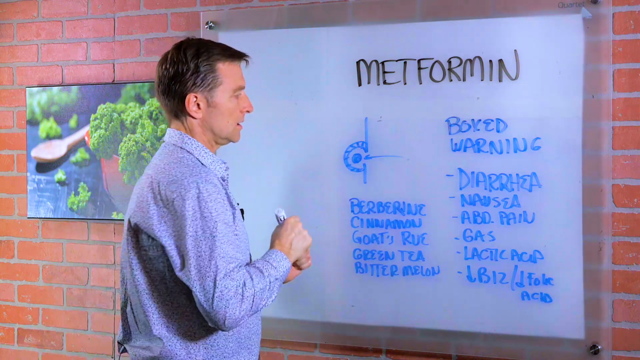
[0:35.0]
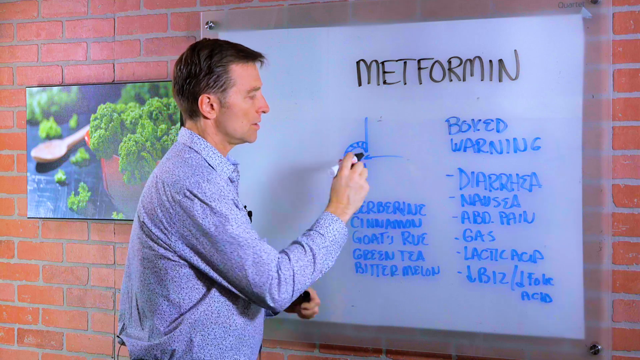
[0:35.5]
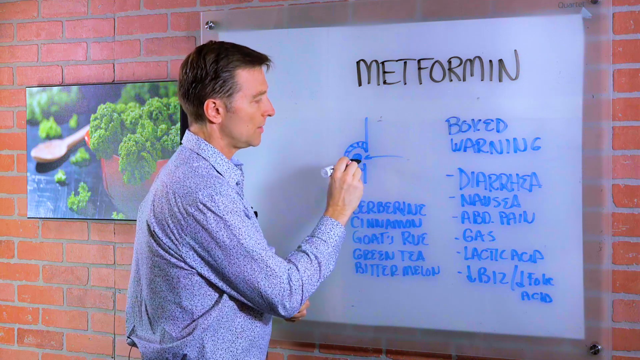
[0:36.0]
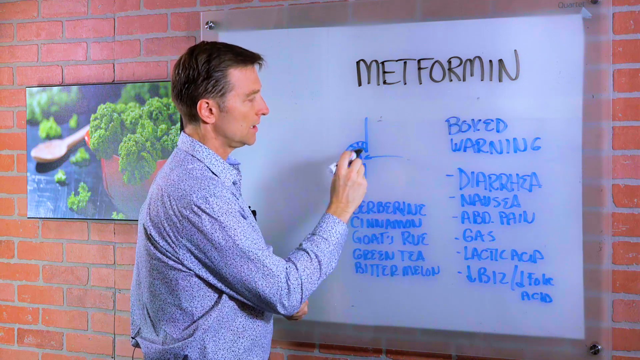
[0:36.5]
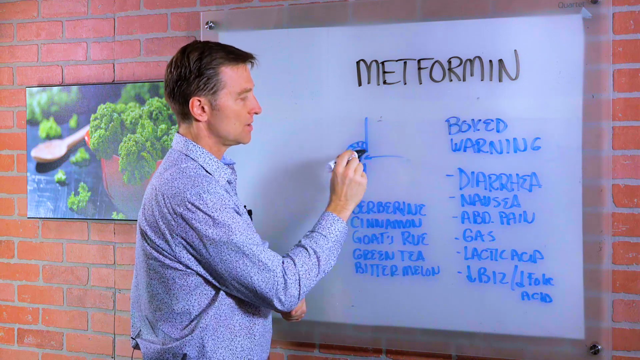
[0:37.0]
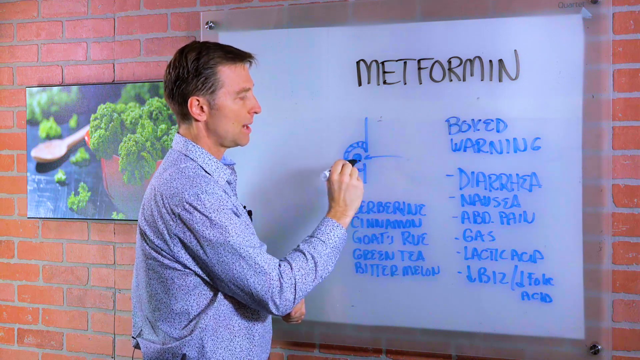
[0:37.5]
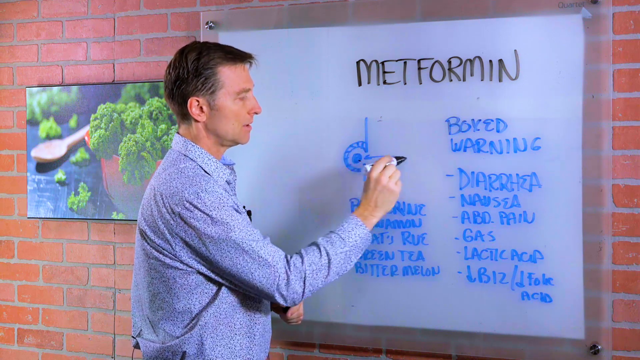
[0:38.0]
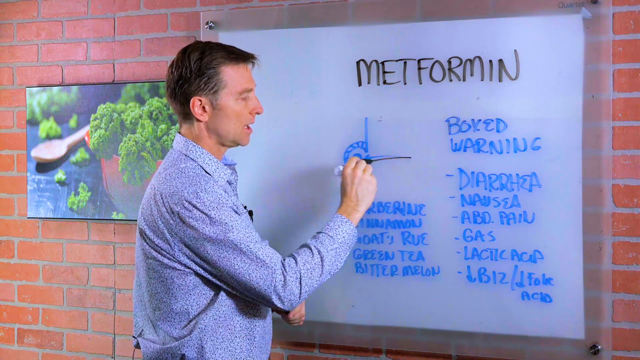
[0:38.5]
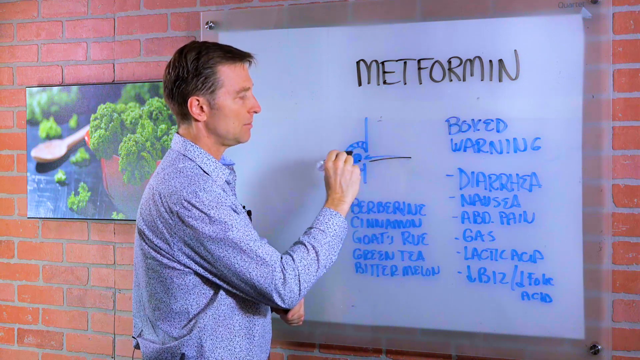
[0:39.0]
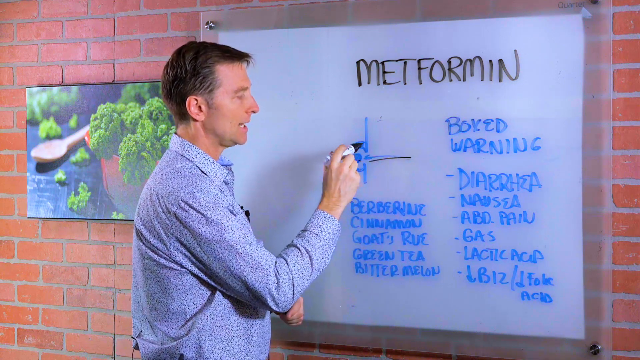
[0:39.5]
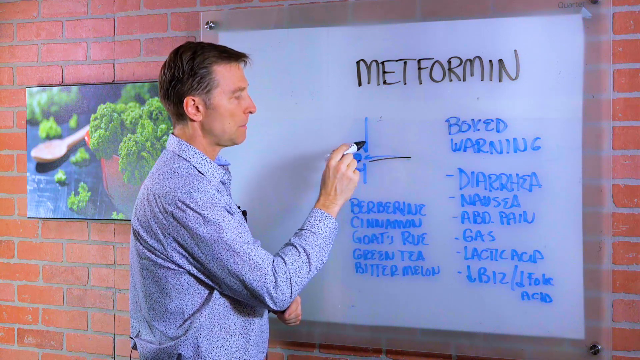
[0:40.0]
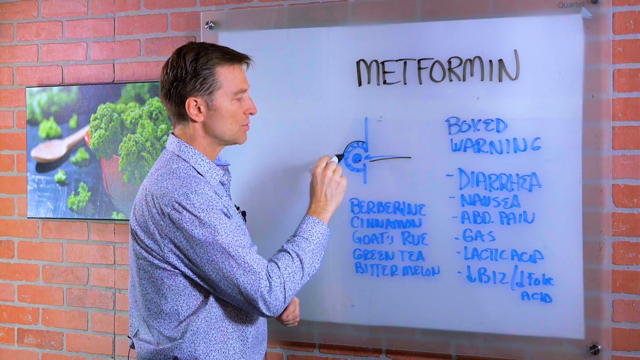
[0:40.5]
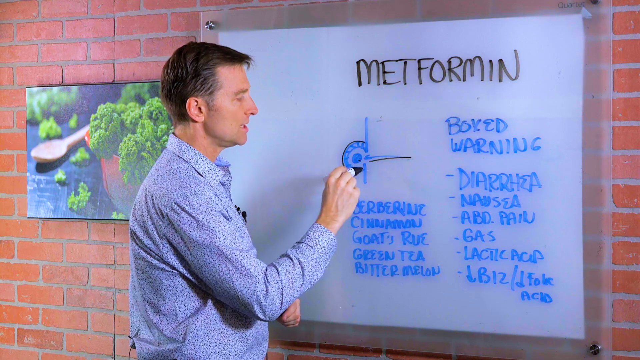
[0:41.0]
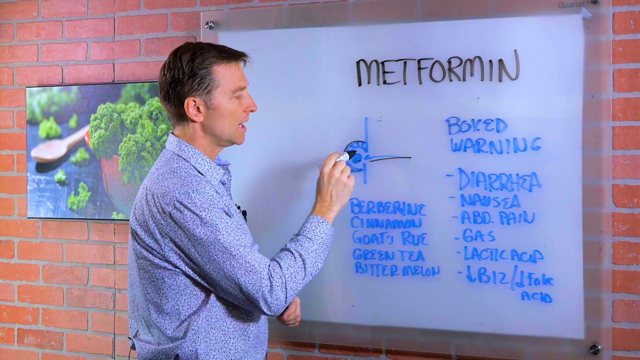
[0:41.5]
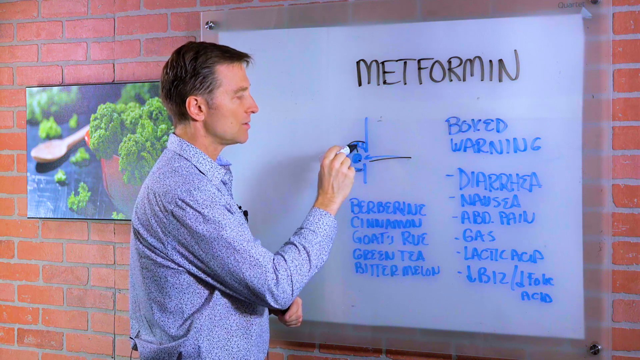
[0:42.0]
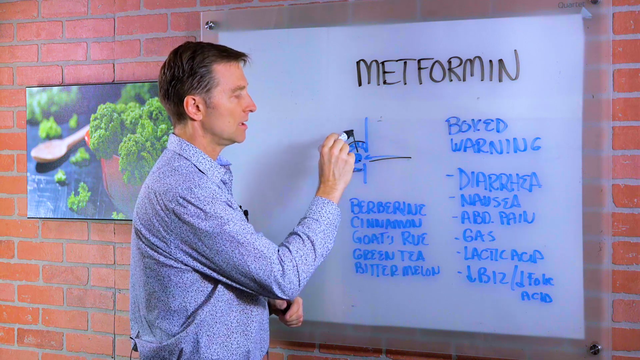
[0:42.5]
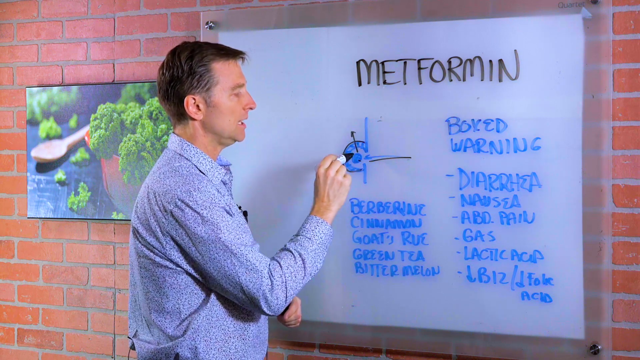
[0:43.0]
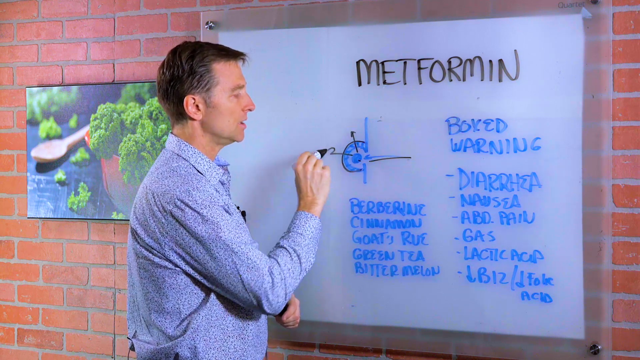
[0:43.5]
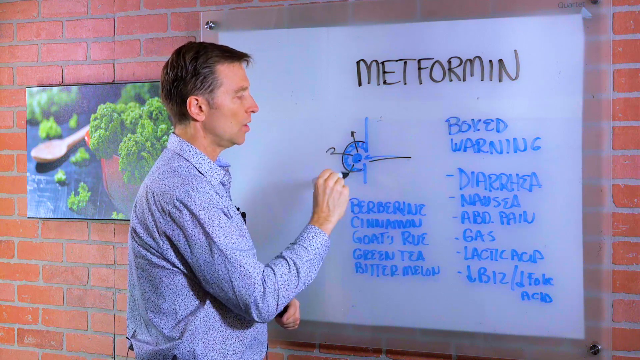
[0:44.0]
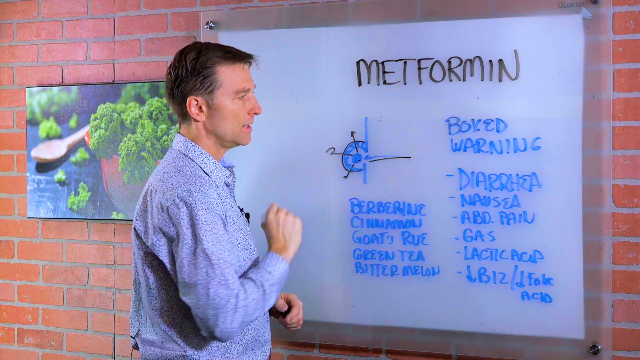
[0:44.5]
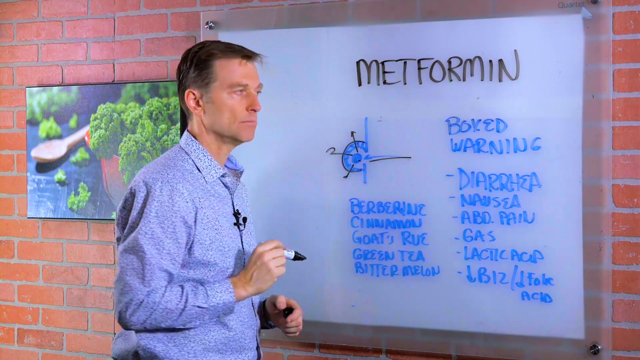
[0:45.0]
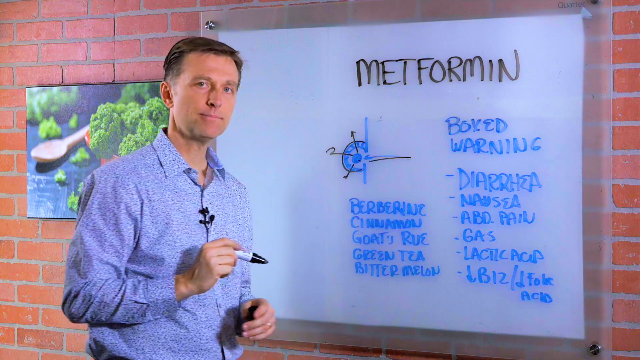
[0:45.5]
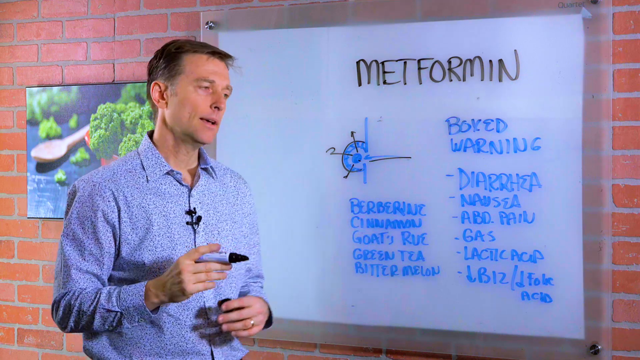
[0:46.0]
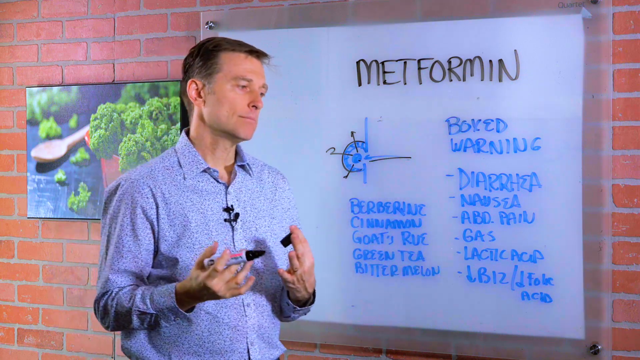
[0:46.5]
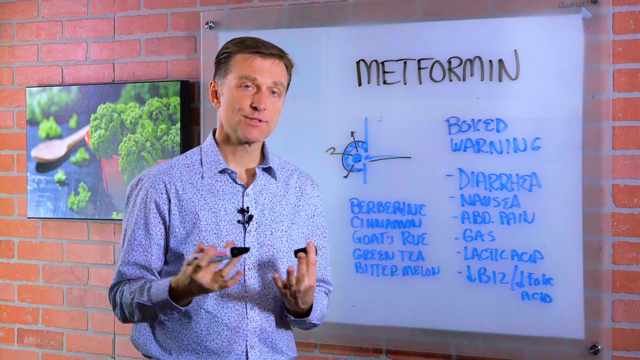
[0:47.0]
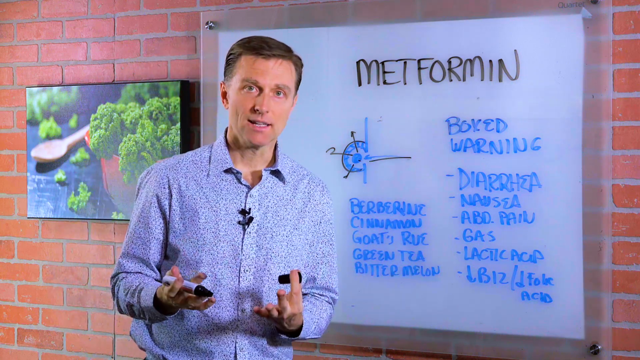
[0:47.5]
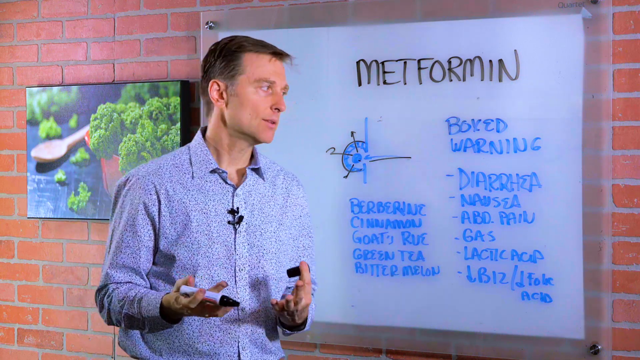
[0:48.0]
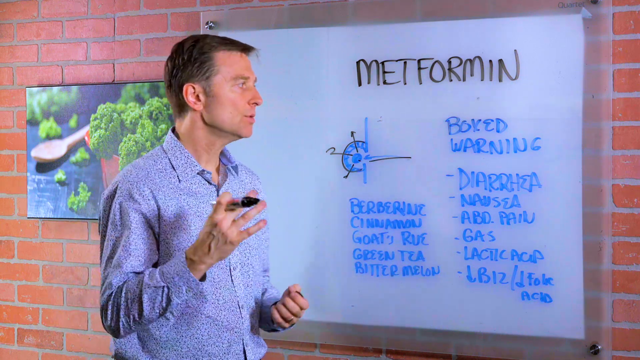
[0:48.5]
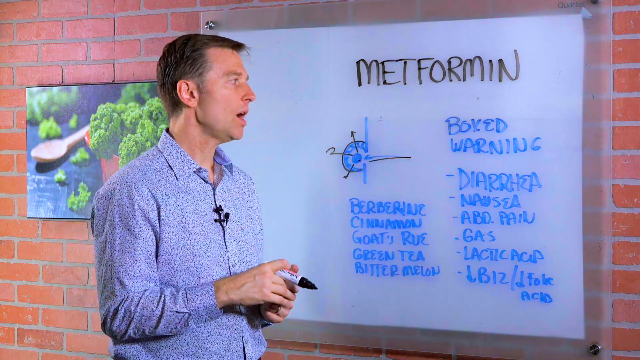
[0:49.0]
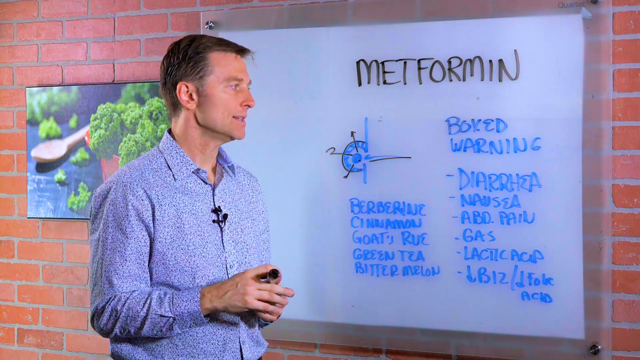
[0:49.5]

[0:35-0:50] The man fully turns to the whiteboard and uncaps a black marker. Holding the marker in his right hand, he draws over the cross-section diagram above the left-side text. His drawing basically outlines the existing blue drawing, and he then makes three lines outward that extend past the original drawing while continuing to point to sections of the diagram. He turns his full body back toward the camera, holding the marker cap in one hand and the marker in the other, and uses his hands to illustrate what he has drawn while pointing at the board behind him. He turns and points to other text below it; the lines he has drawn extend past the lines of the original diagram, so the difference between the two is visible. He continues gesturing while facing the camera more than the board.